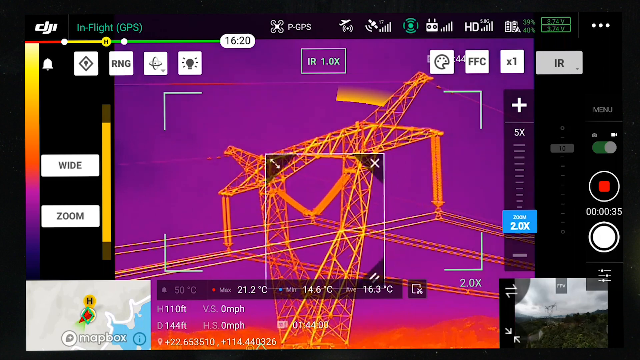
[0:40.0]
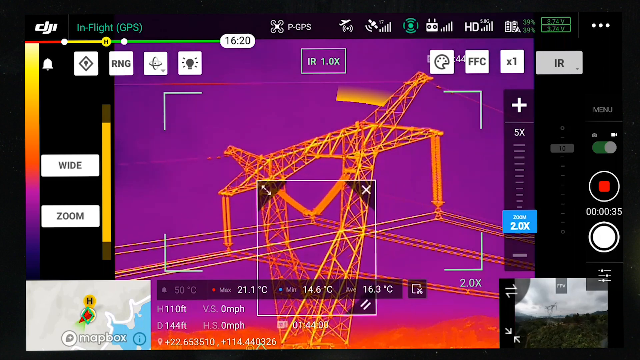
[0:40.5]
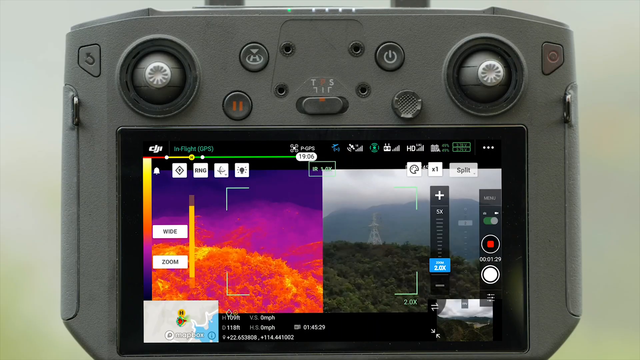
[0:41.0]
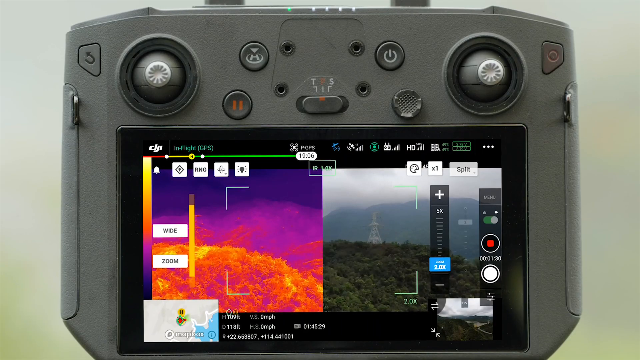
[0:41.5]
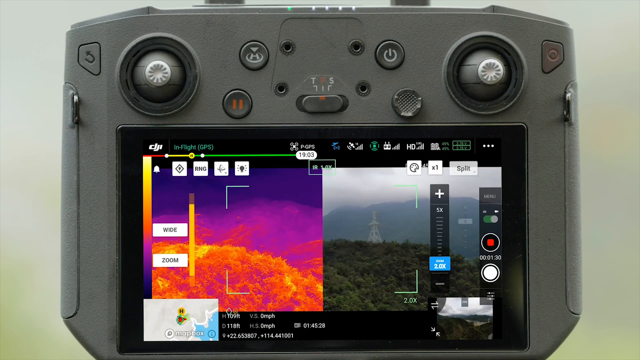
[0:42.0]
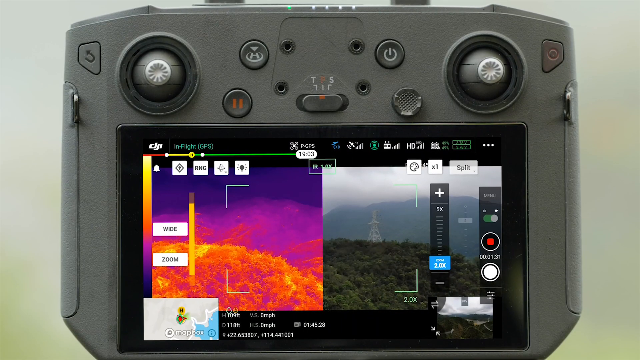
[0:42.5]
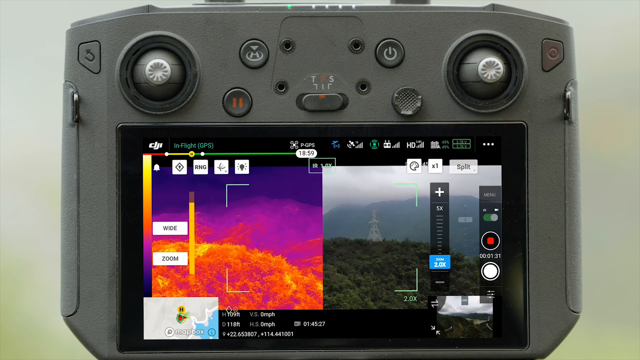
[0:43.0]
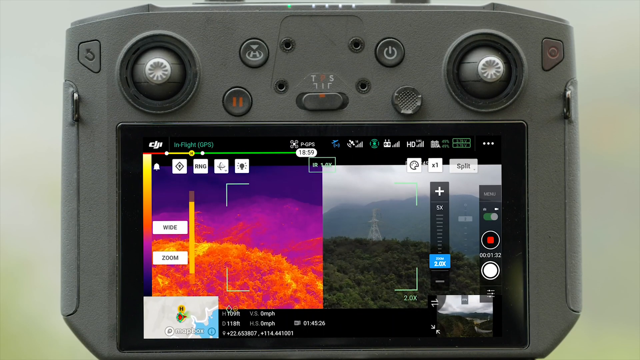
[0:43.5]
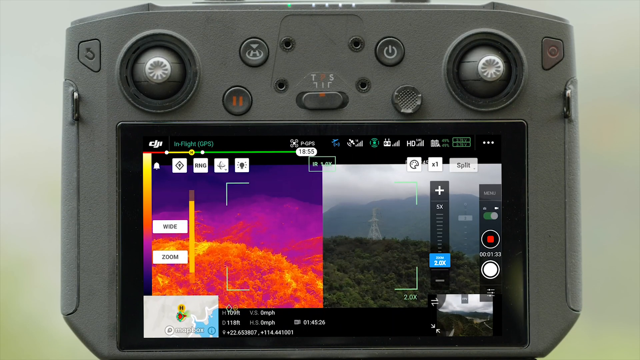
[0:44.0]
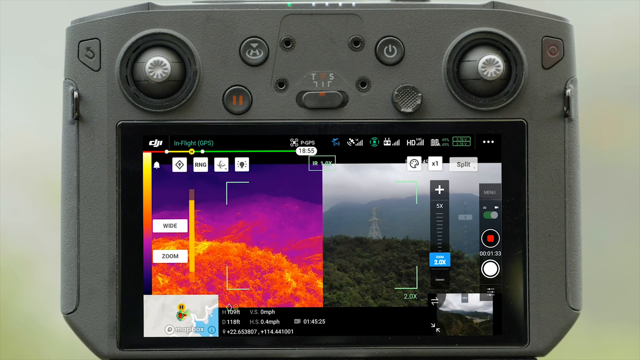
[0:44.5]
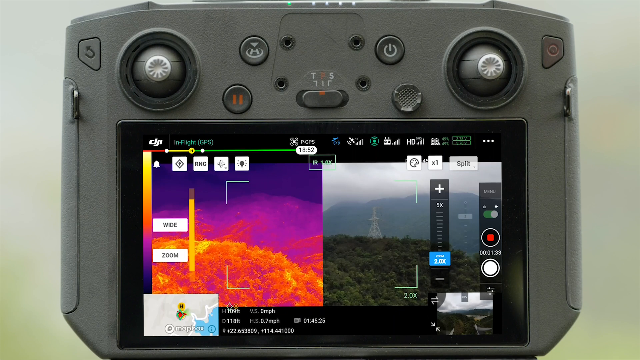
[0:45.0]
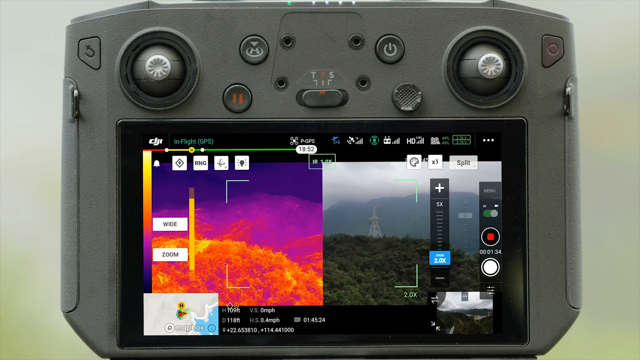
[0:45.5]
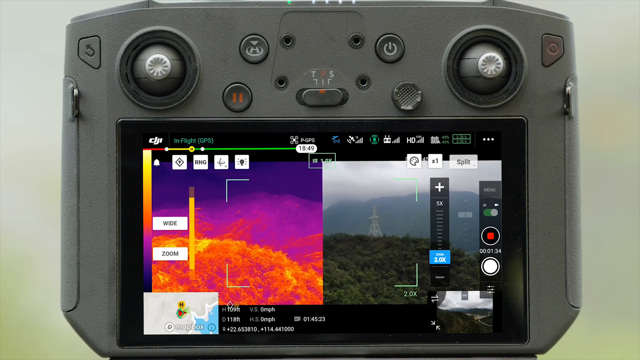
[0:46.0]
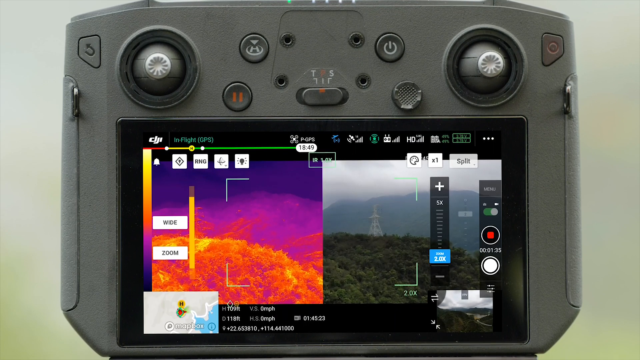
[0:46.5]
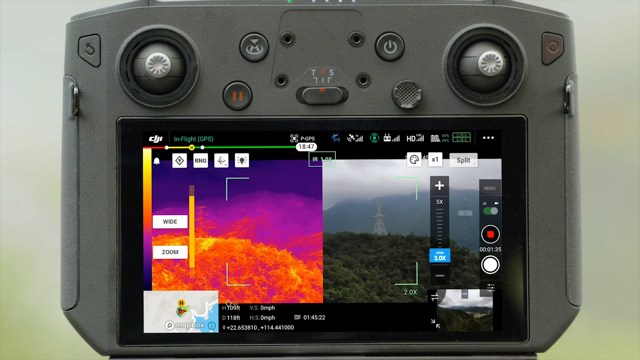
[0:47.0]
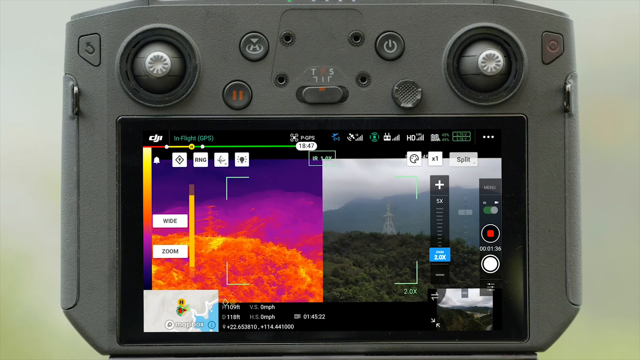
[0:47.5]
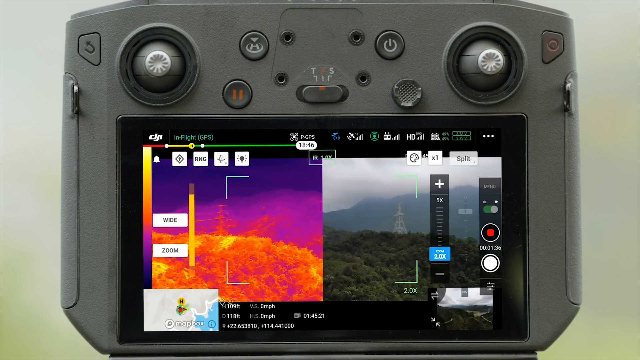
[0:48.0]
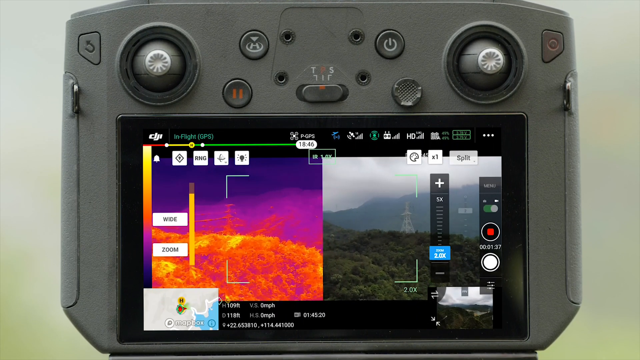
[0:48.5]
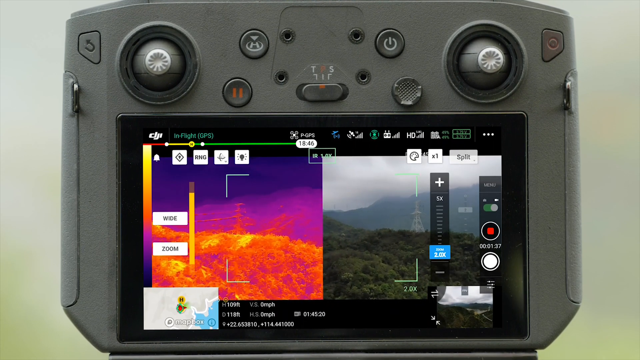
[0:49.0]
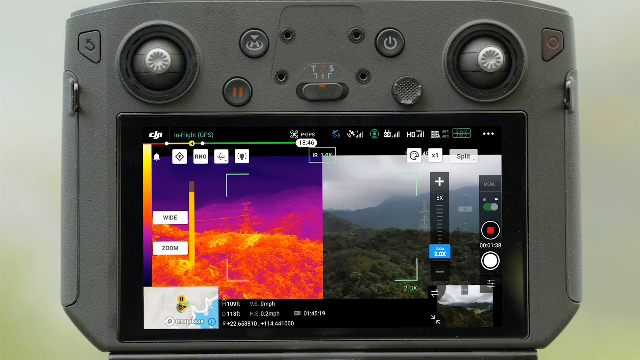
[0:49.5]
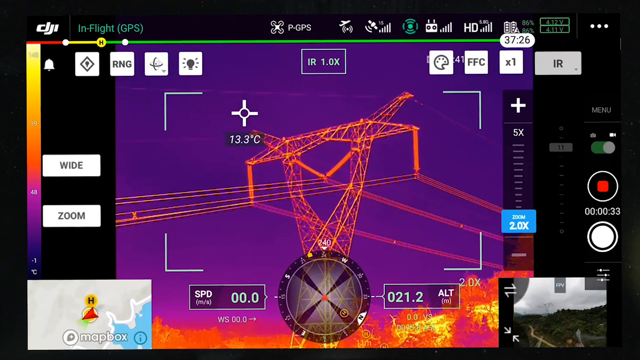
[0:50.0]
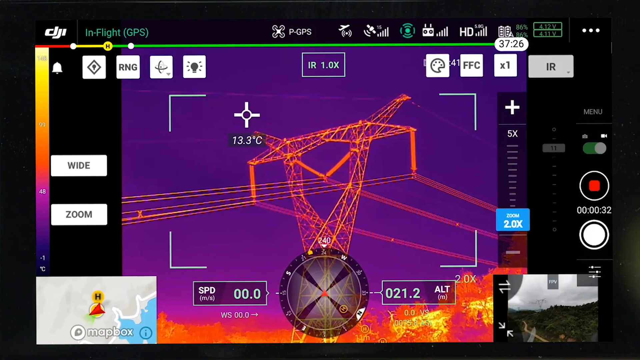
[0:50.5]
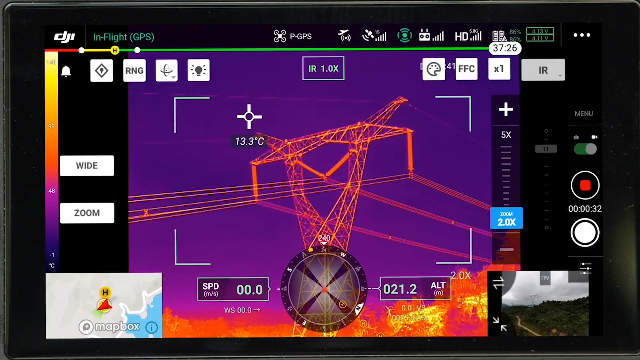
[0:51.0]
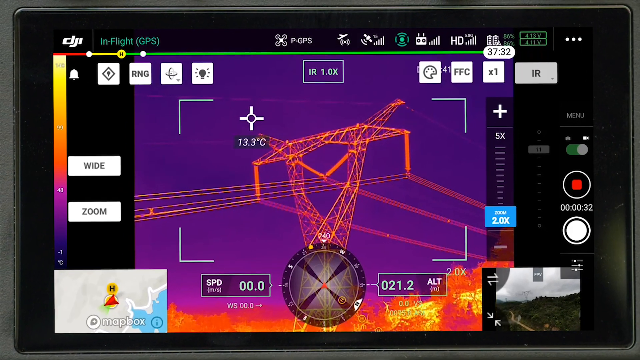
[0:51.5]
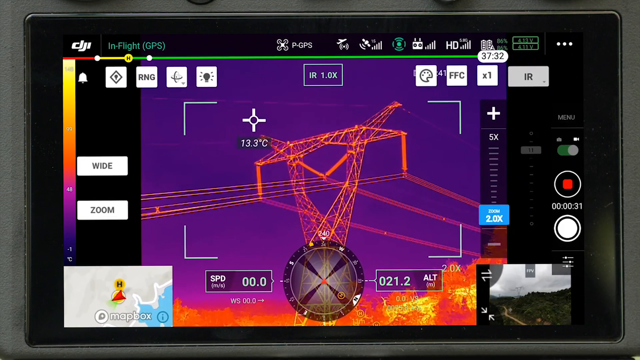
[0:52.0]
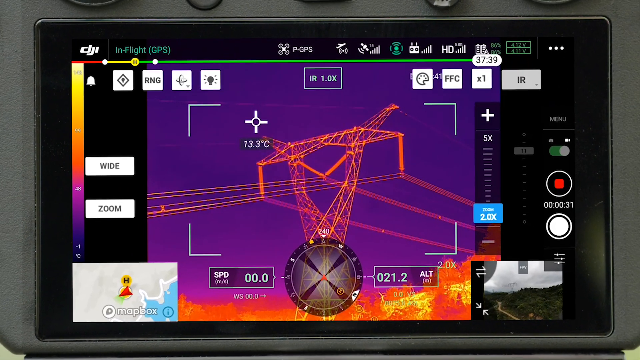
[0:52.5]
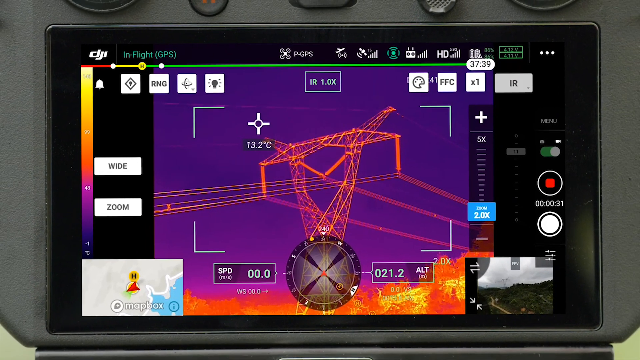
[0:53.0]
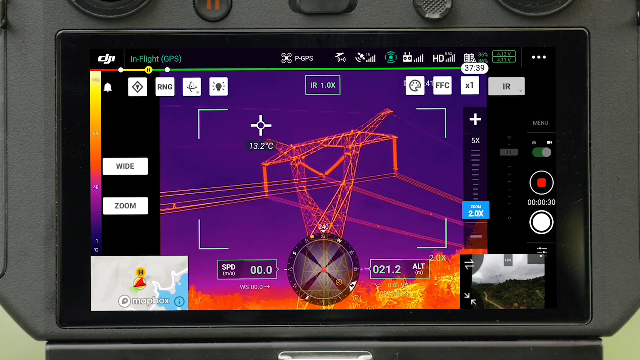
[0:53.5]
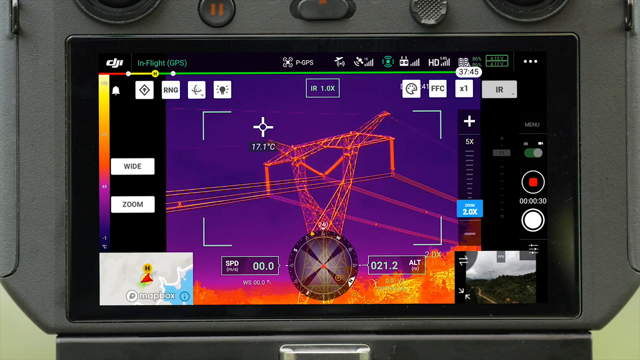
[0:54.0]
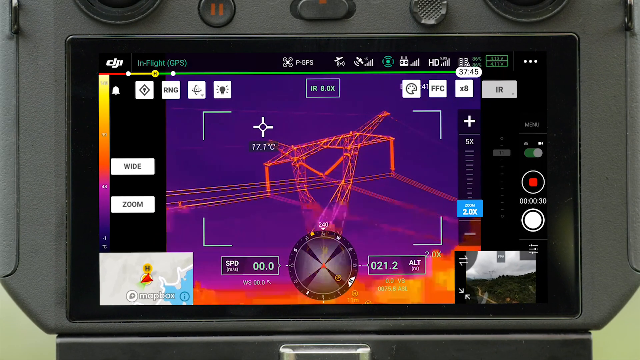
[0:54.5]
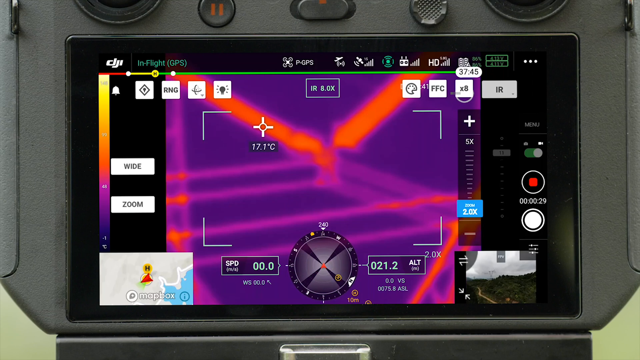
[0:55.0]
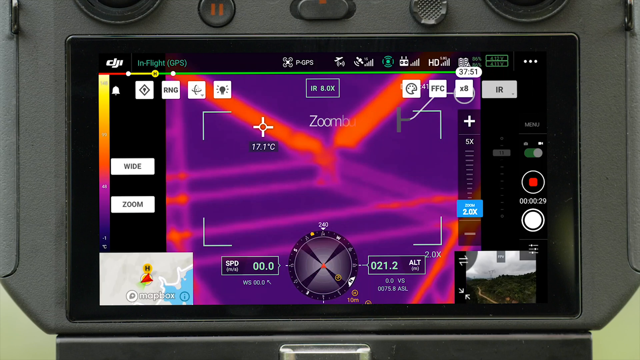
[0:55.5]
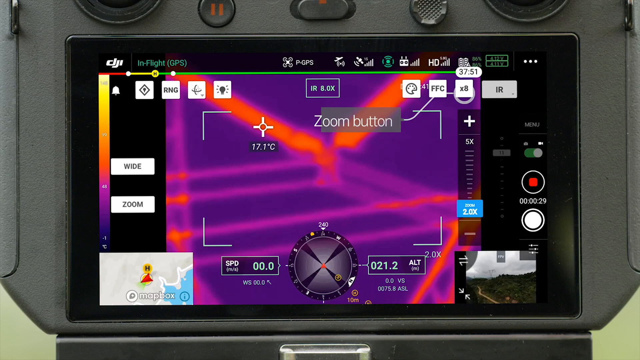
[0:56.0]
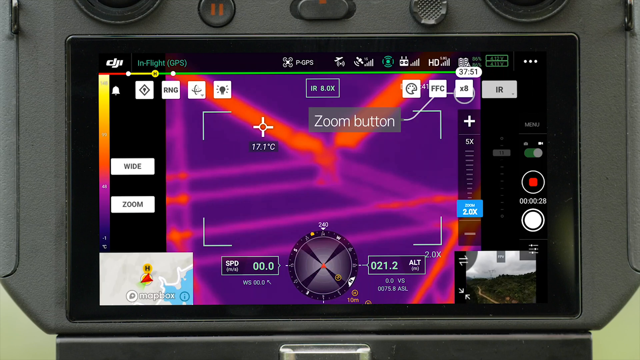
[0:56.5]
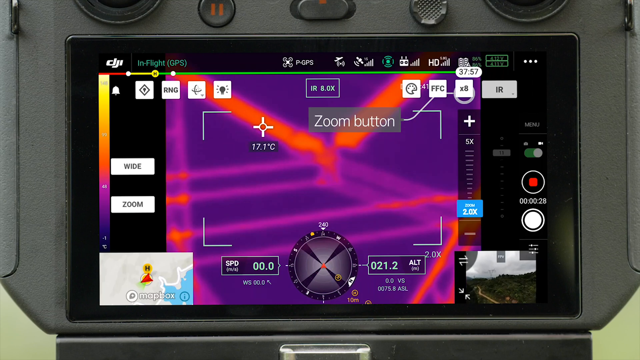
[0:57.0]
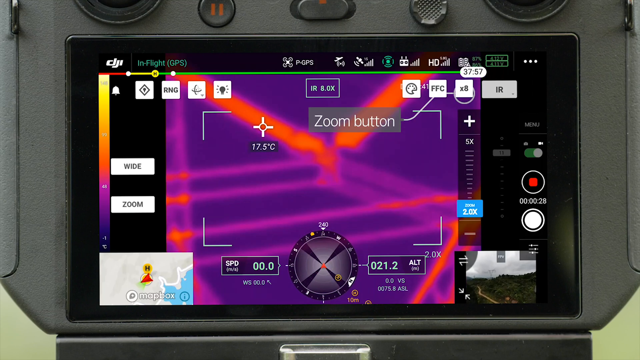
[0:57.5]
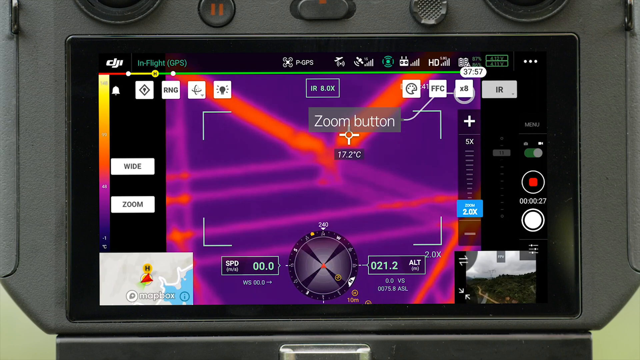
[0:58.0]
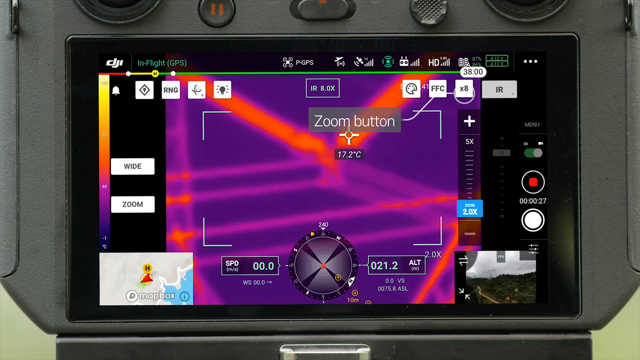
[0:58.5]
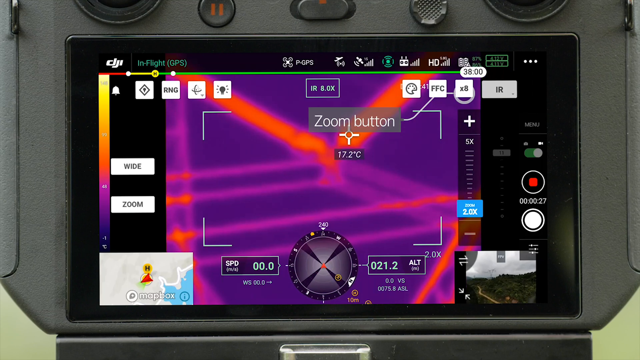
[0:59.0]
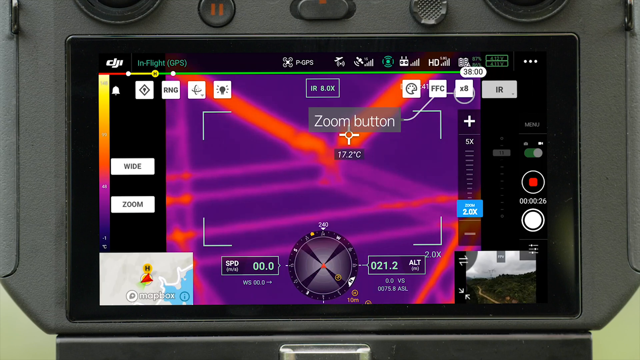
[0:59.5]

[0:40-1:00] A close-up shows the screen of the remote. In the center is the top of a pylon in a heat map, with a purple background and an orange pylon. The top right corner of the pylon is highlighted with a box, and on the right of the screen the zoom shows two times, then goes up to five times. The user drags the box down and to the left. In the next scene the whole remote, not just the screen, fills the frame. It has two joysticks at the top left and top right, a button to the top right of one joystick and to the top left of the other, and two buttons to the right of the left joystick, with a switch at the bottom. Below that is the screen. On its left is a heat map of the tops of trees: dark purple at the top, brighter purple in the middle, and the trees in orange below. On its right is a normal view from the drone of the scene the camera is looking at. The camera pans from right to left on both images, and then the image changes to a close-up of the screen again, panning out slightly. It shows an extreme close-up of the pylon, with a dark purple background, orange arms of the pylon and brighter purple wires. The screen shows the function of the zoom button: at the top right, "zoom button" appears in a grey box, with a line going up to a white box that says "HFC".